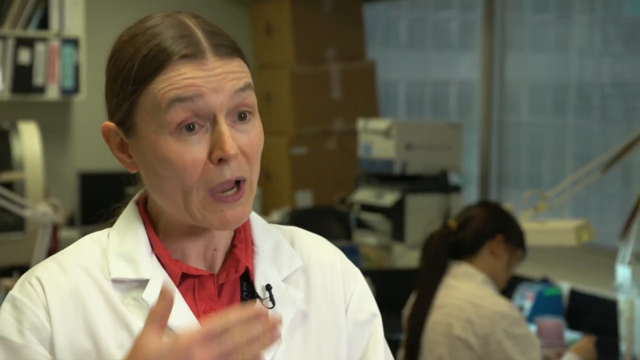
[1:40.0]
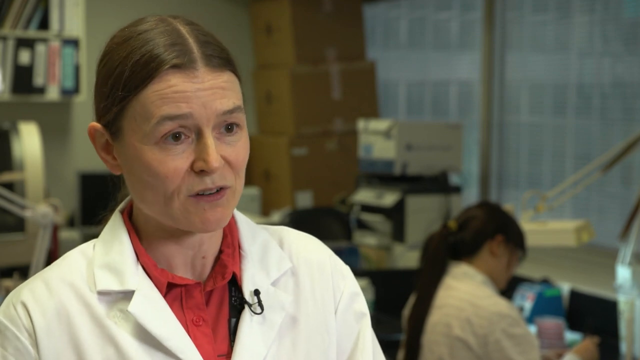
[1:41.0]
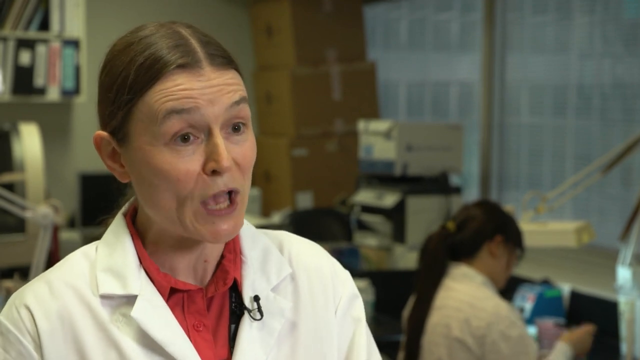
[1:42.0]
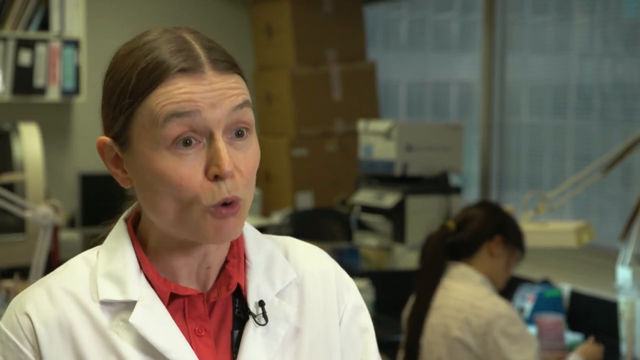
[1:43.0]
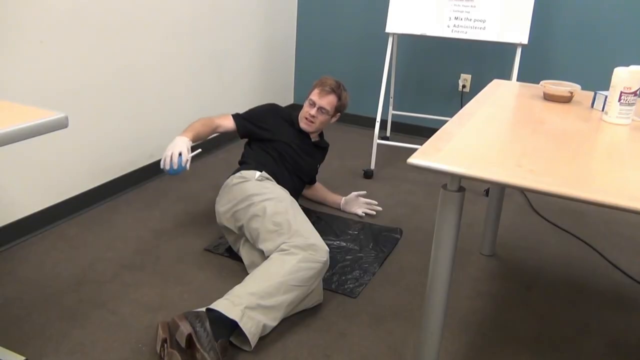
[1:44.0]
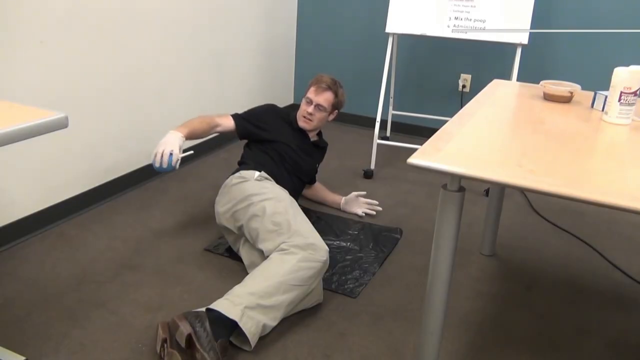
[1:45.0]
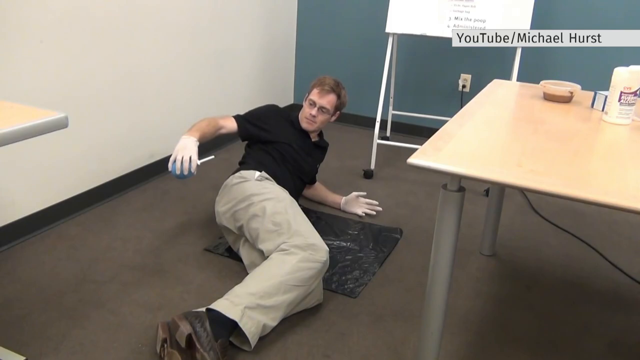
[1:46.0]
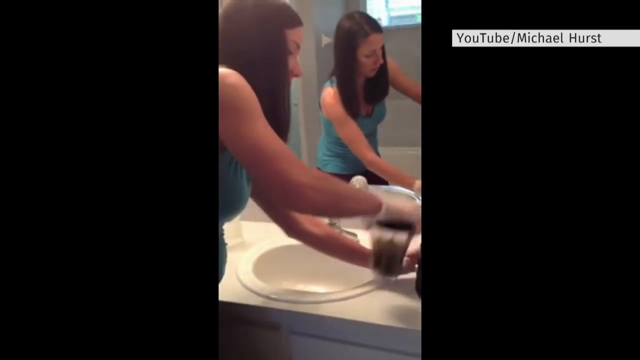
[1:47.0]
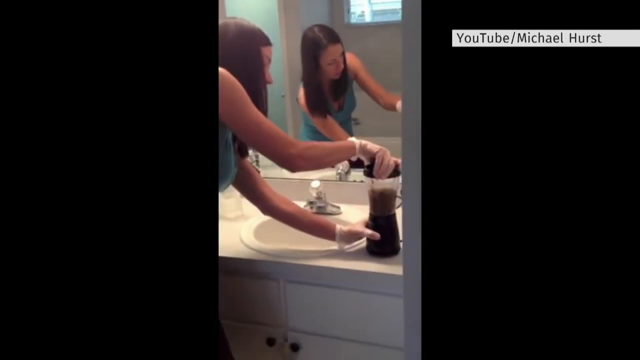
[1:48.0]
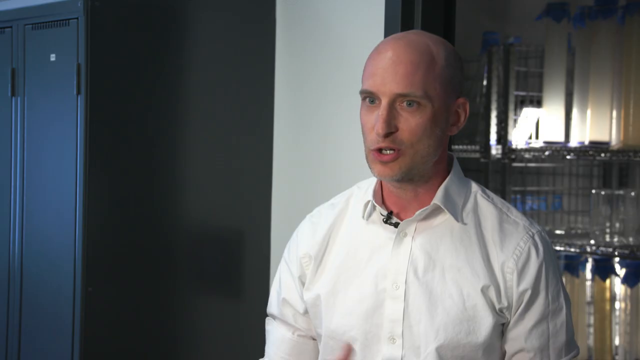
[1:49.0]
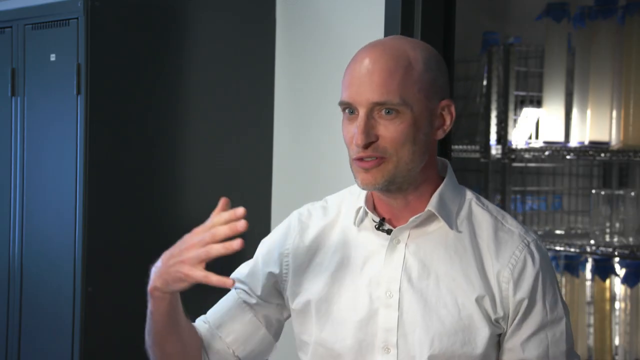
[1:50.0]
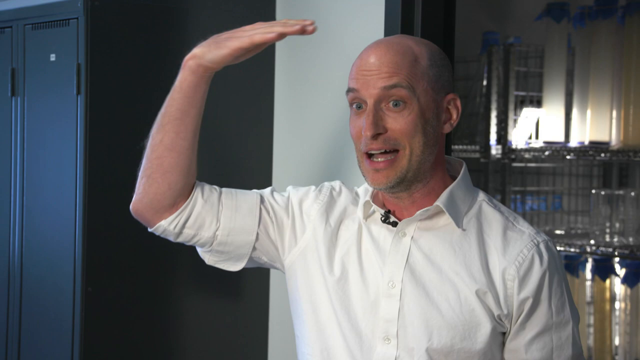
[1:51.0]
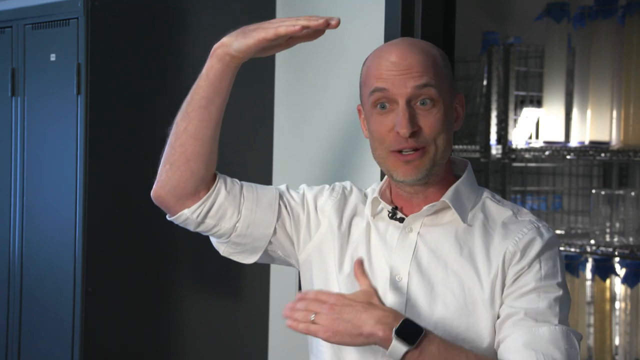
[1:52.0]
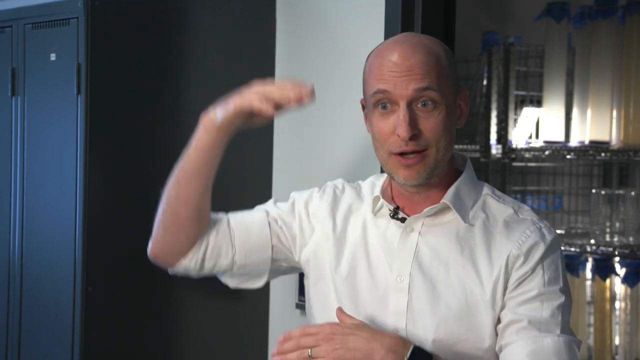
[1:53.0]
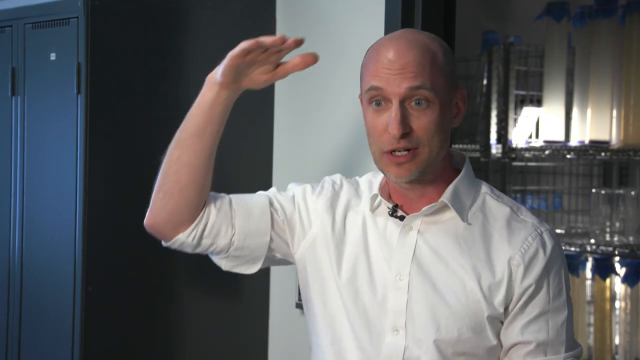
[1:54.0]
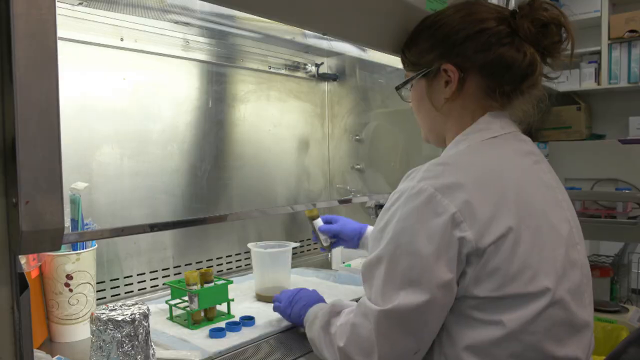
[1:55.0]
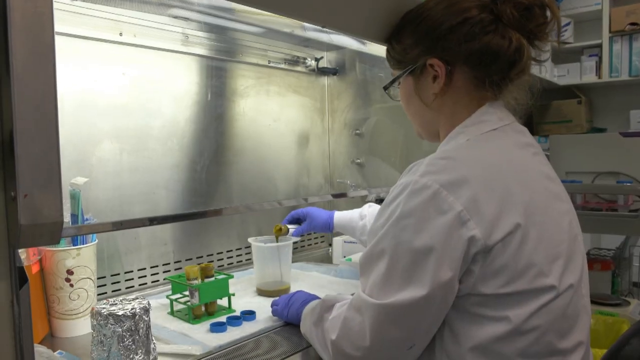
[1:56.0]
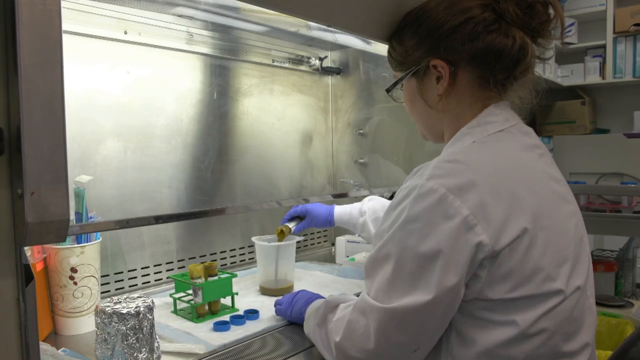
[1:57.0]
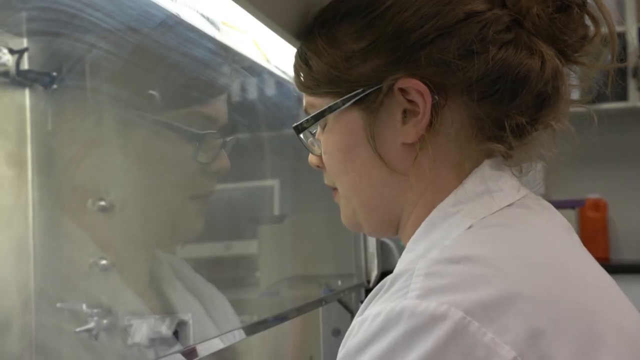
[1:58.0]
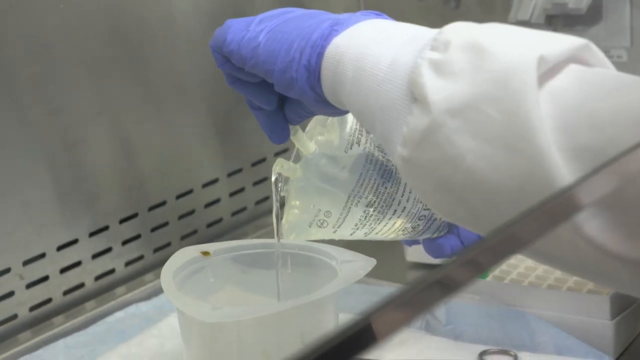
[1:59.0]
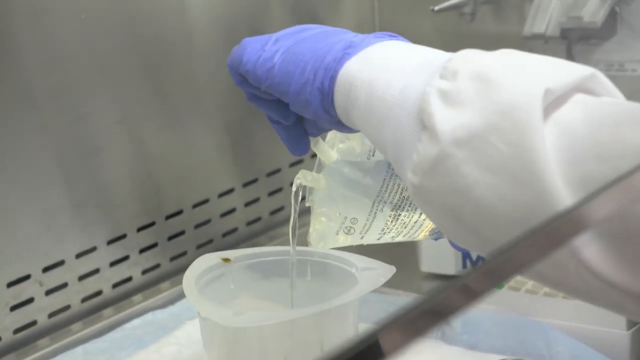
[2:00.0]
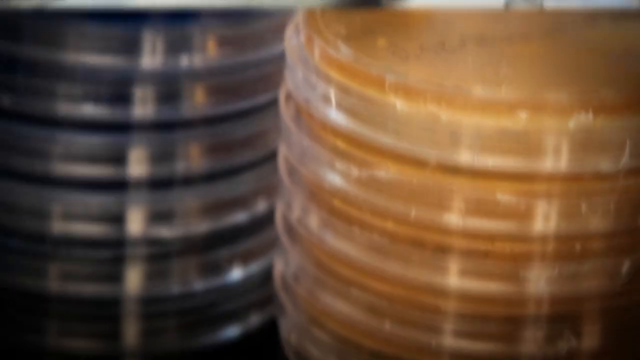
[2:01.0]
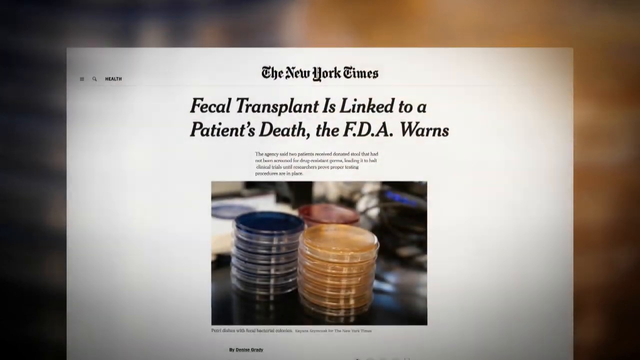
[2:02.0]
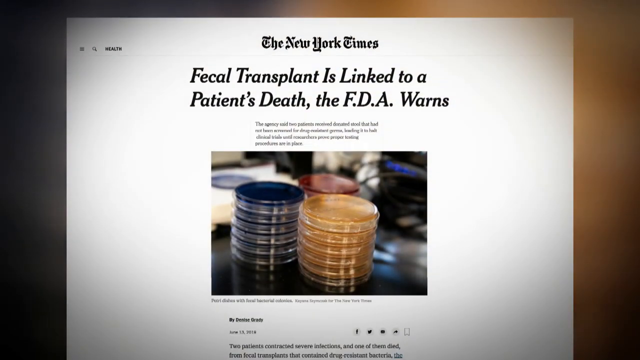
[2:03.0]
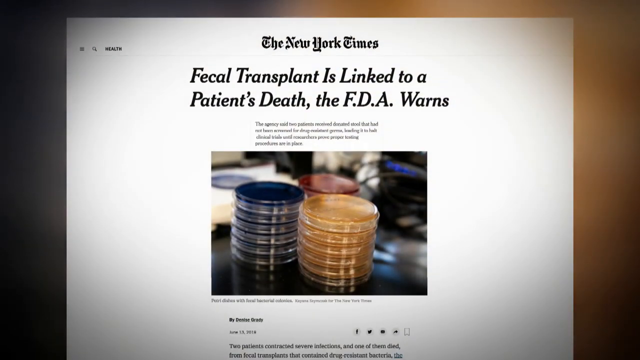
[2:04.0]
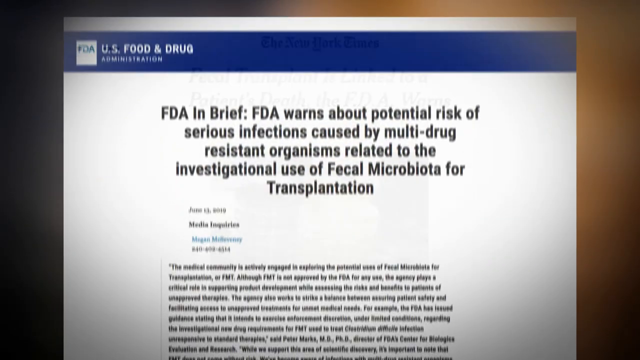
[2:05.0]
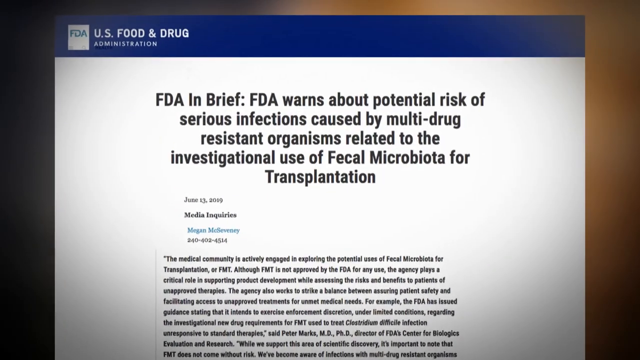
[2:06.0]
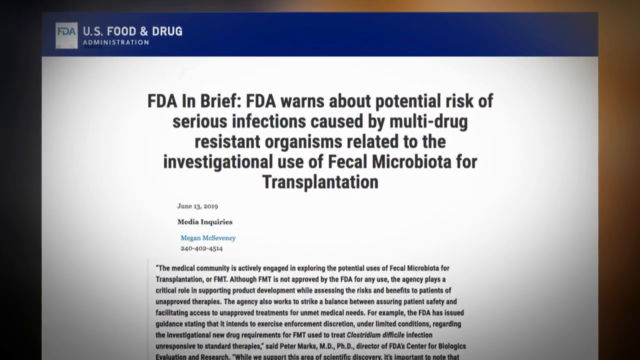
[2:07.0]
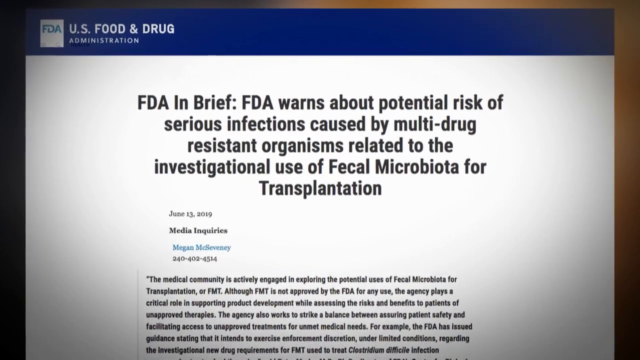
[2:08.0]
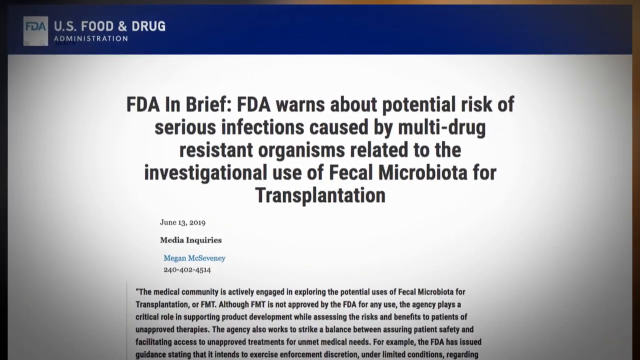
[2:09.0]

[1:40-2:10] The doctor in the white lab coat and pink shirt, with a microphone on her left collar, looks off camera to the left or right as she talks to the interviewer, moving her right hand expressively with the palm inwards and the thumb extended upwards, nodding her head slightly and raising her eyebrows several times. The scene changes to a room whose left wall is white and whose right wall is a kind of dark blue; there is a whiteboard in front of the blue wall and a yellow table in front of the whiteboard. The lower half of the walls, the whiteboard and the left side of the table are visible, and the corner of a second table is on the very left side of the screen. A man in the center of the screen lies on his side on the brown floor, with a small black mat underneath his hips and his left forearm on the ground. He wears glasses, a black t-shirt, cream-colored trousers, brown shoes and white gloves, and he holds a blue item with a white tip in his right hand, which is extended behind him, with his body twisted to face the item. Next comes a vertical-style video with black bars on the left and right sides; in the top right corner a white box with black text reads "YouTube/Michael Hurst". A woman stands in a bathroom in front of a mirror, with a sink in front of her. She wears white gloves and a blue top and has long brown hair, and she has both hands on what looks to be a blender: her left hand holds the black base while her right hand twists clockwise to secure the top half to the bottom half. Then a man appears wearing a white shirt with a black microphone on the right side of his collar. He has no hair and is quite pale, and he looks off to his right and the viewer's left, talking expressively towards the interviewer. He lifts his right arm with his elbow out flat and his hand curved towards his head, waves his hand back and forth several times, and lifts his left hand up to chest height and moves it back and forth as well. He has a ring on his third finger and wears a white watch with a black screen. Next, a doctor in a white lab coat, blue gloves and glasses, with brown hair in a bob, pours a green liquid into a container with her right hand while her left hand rests steady on the table in front of her. A close-up shows her face in side profile, with her reflection visible in a kind of transparent sheet in front of her. She is then quickly shown pouring a clear liquid out of a transparent bag with small black text on it, holding the bottom right side of the bag with her right hand and pinching and tipping the top of the bag towards the open container with her left hand. The video then shows an orange multi-layered oval-shaped item in the background, with a blue one on the left-hand side and the orange ones on the right. A white article from the New York Times pops up at the bottom of the screen and covers most of it, with black text reading "fecal transplant is linked to a patient's death the FDA warns". A second article overlaps the first; it has a blue header with white text reading "U.S. Food and Drug Administration", and its black title text reads "FDA in brief FDA warns about potential risk of serious infections caused by multi-drug resistant organisms related to the investigational use of fecal microbiota for transplantation". The camera zooms in on the title.